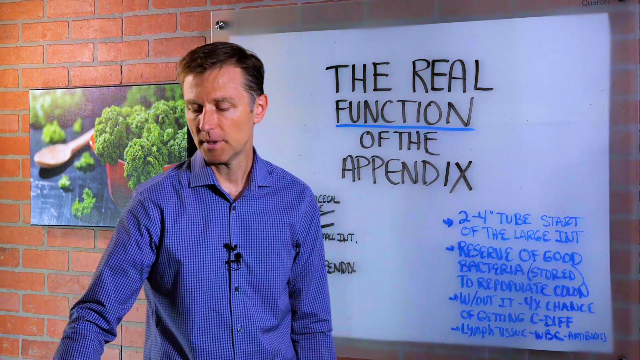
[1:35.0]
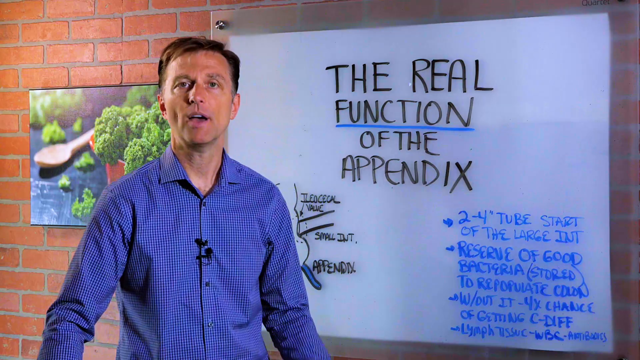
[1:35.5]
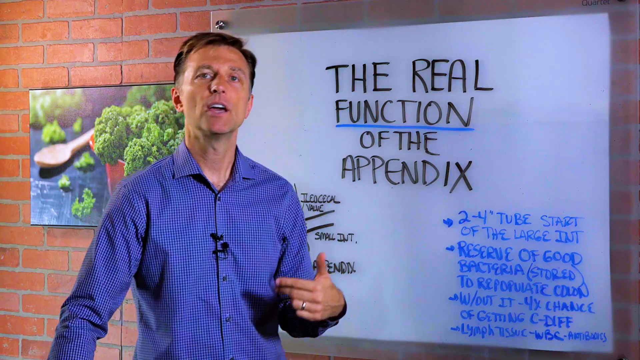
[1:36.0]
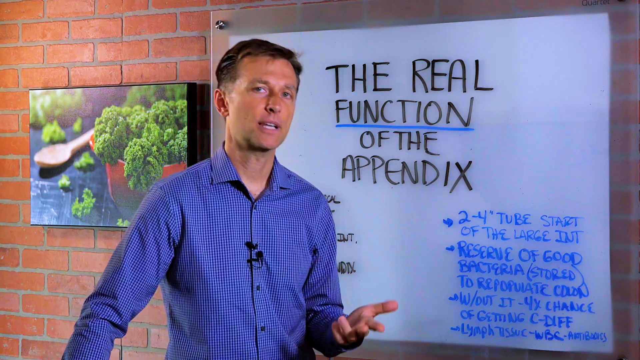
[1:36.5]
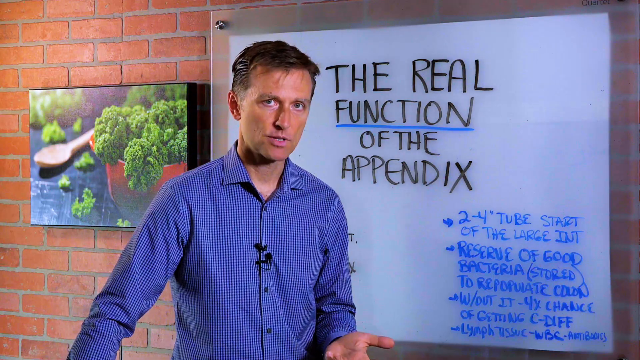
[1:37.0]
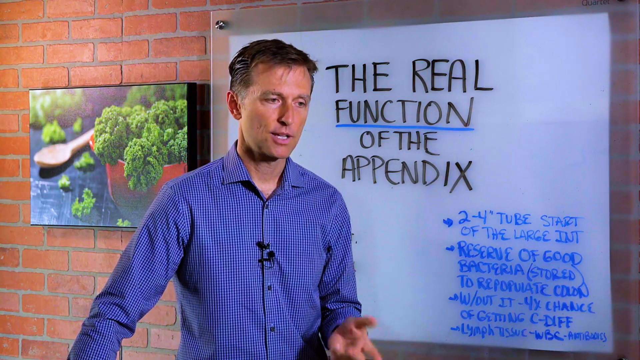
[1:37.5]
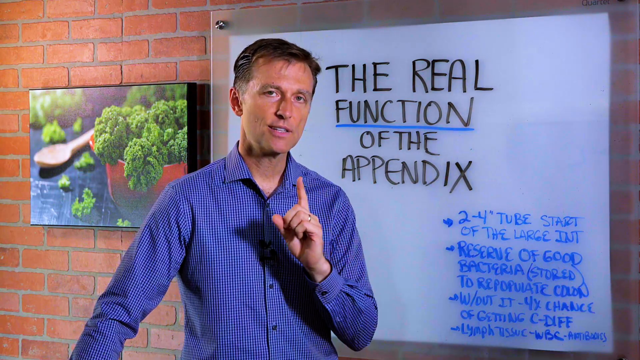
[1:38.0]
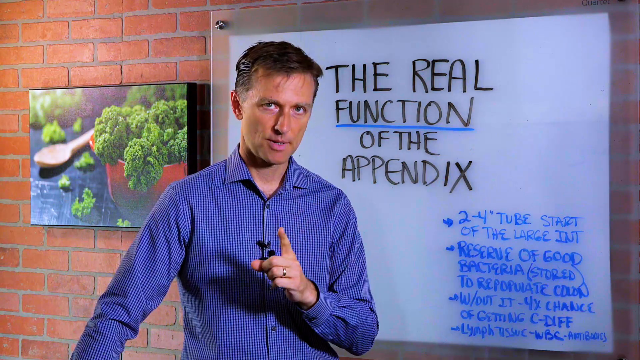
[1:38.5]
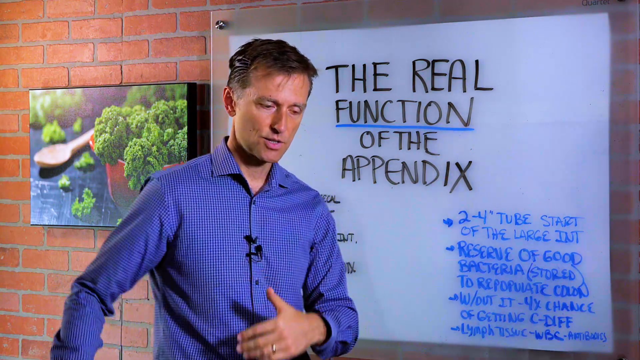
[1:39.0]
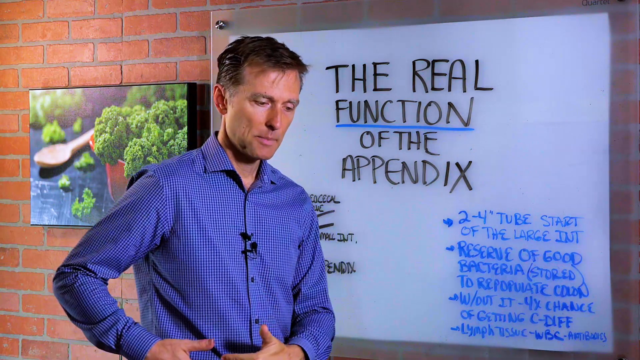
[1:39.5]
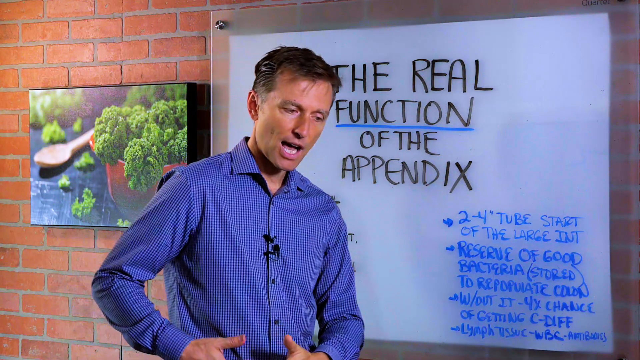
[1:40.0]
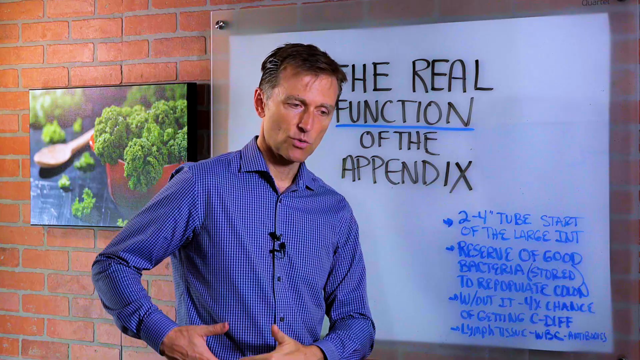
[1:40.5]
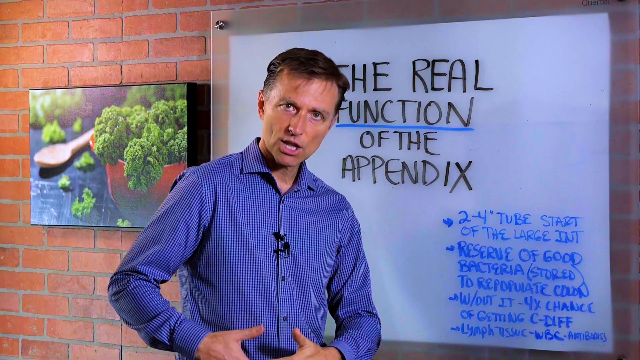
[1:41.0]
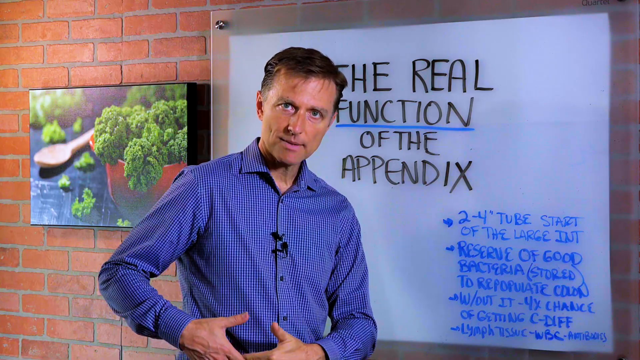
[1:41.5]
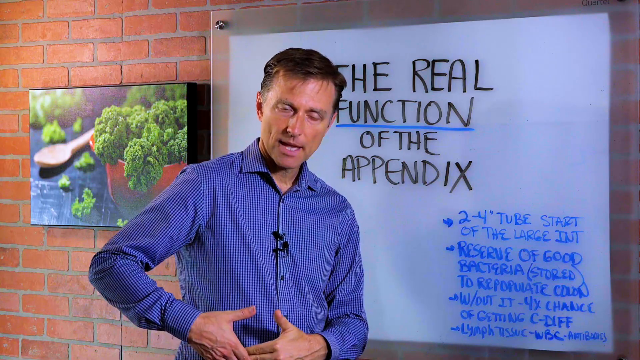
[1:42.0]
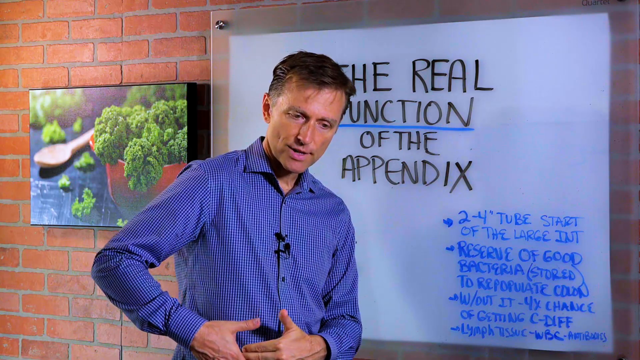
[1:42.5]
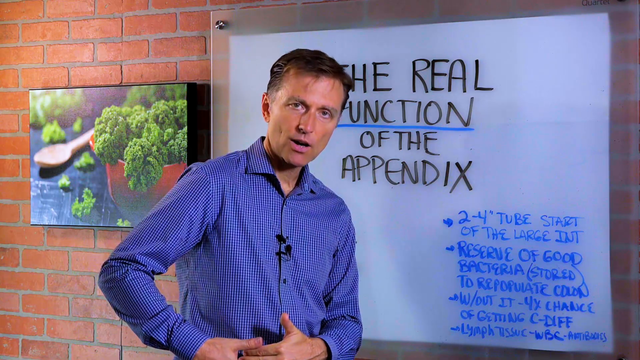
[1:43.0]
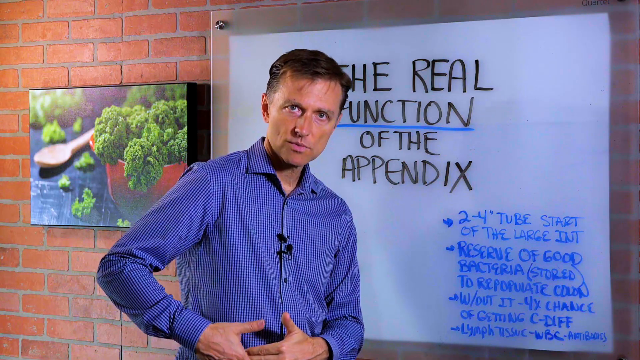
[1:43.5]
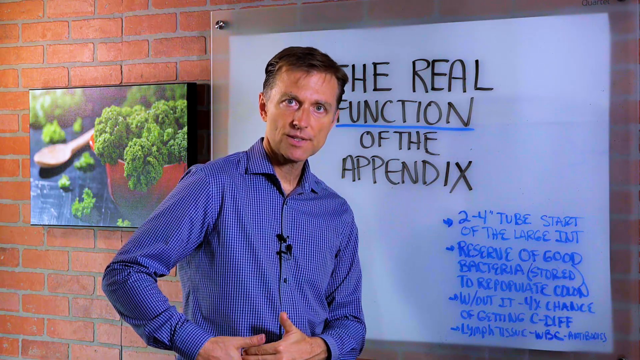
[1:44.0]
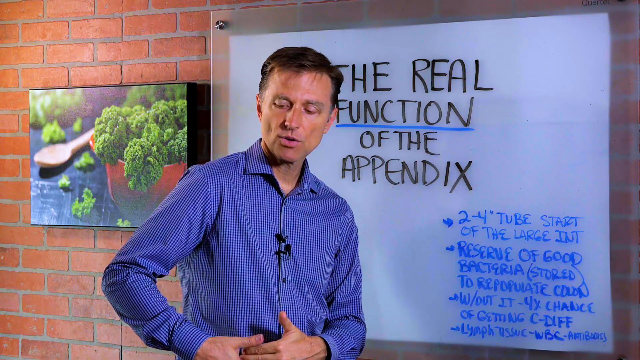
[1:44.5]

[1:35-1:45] The man, still talking passionately, looks at the camera alone in the frame. He points toward his belly, rubs it a little, and points at it some more, then grabs his side with both hands and points there while he talks. Once he points at the viewer. The scene is the same brick wall and the same board; he blocks the drawing, so only "the real function of the appendix" is visible. The buttons on his shirt are black, and his eyes are kind of blue, maybe blue or green.